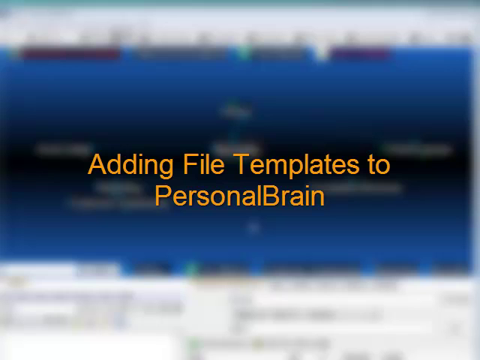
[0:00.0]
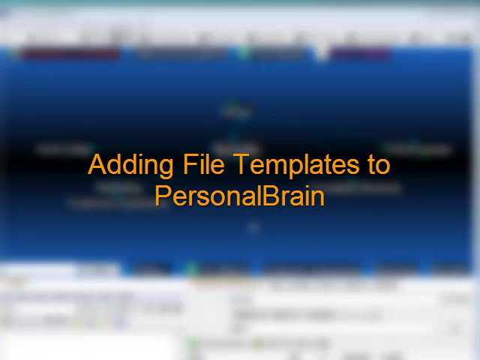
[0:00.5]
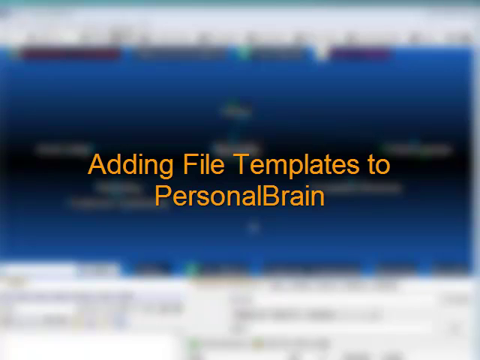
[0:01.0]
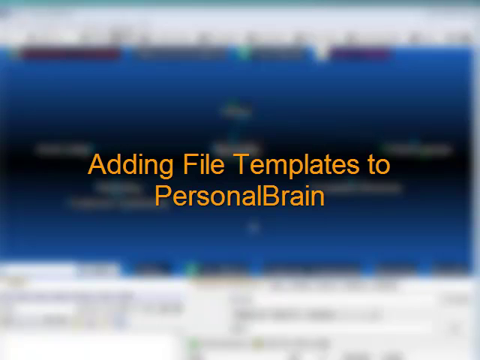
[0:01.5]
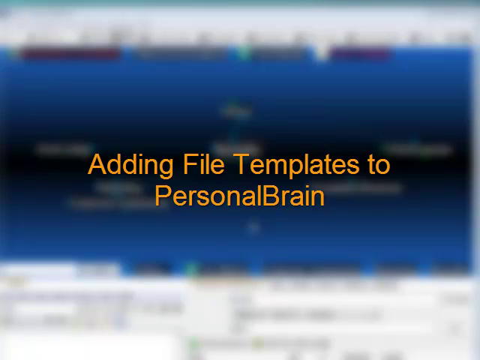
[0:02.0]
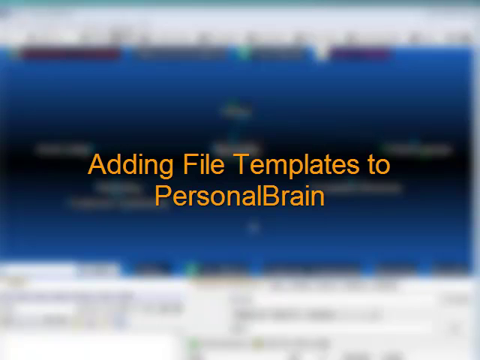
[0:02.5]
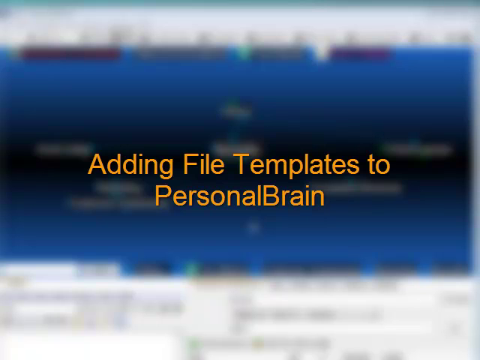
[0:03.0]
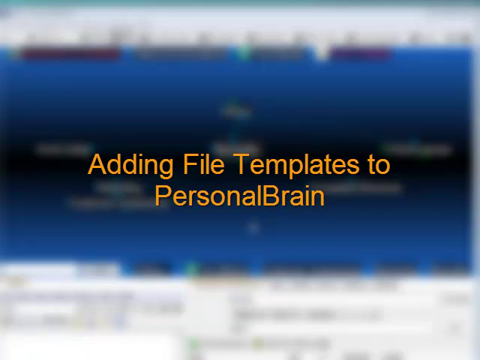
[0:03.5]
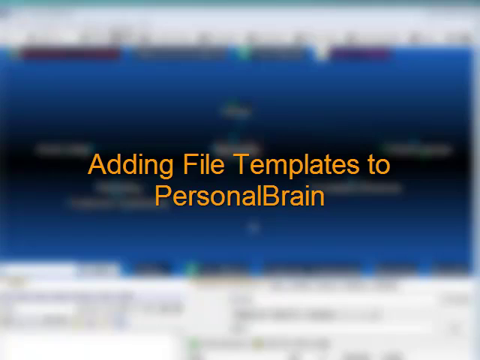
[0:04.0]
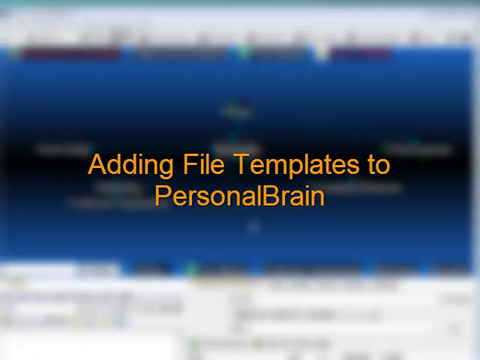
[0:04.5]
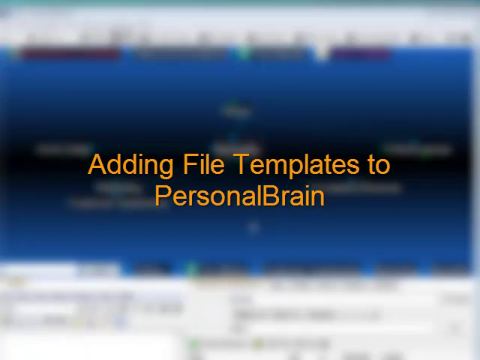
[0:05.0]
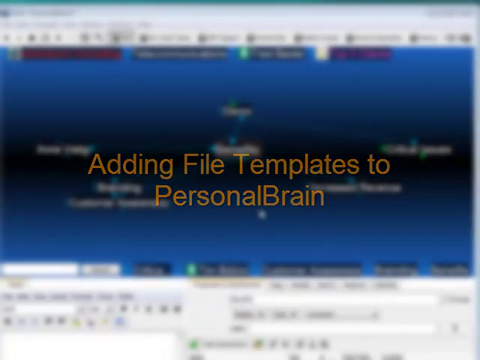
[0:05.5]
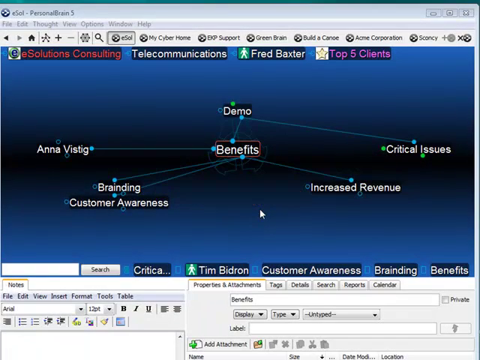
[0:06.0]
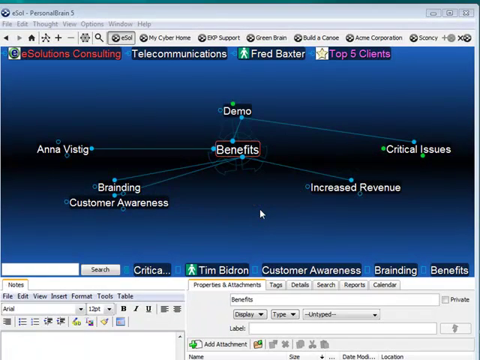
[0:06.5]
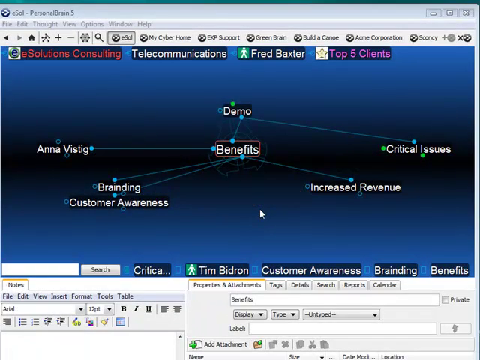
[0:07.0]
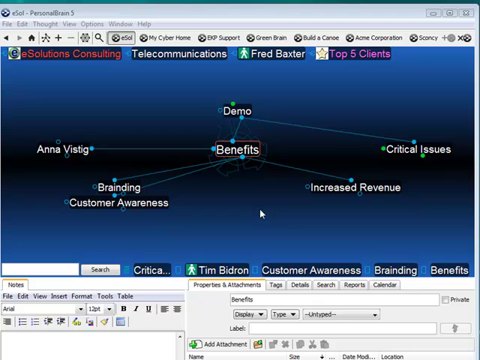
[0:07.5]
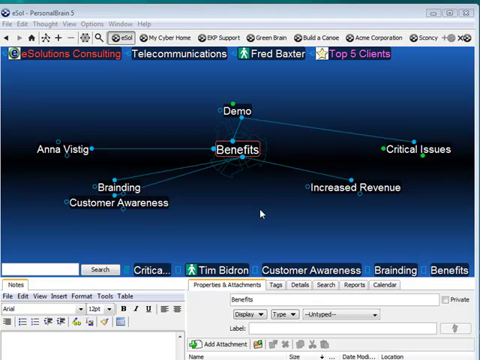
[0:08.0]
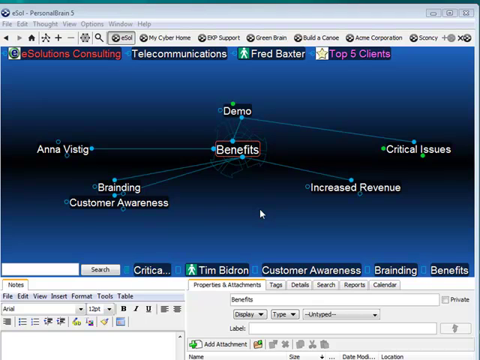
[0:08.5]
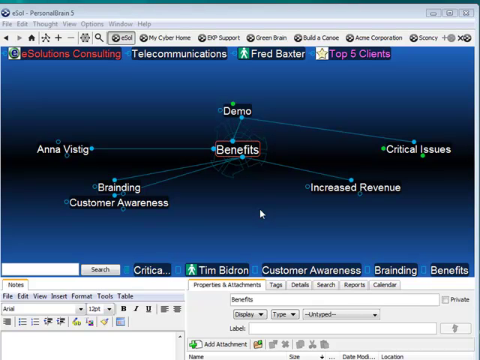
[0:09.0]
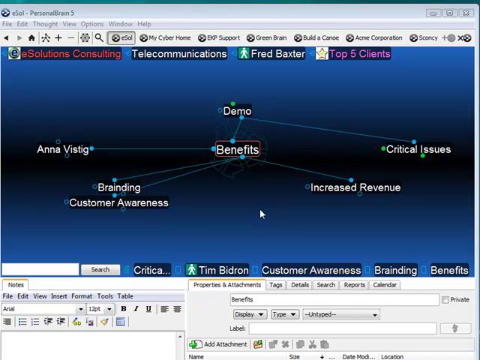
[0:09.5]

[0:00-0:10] Orange text reads "adding file templates to personal brain," with what seems to be faded-out text in the background. The video then shows some sort of web design that appears to be a demo map, with "demo," "benefits," "analytics," "branding," "customer awareness," "increased revenue" and "critical issues" shown as its stats. "Solutions," "consulting," "telecommunications," "Fred Baxter" and "top five clients" appear as headings. It seems to be in a software called Personal Brain 5, apparently mind map software.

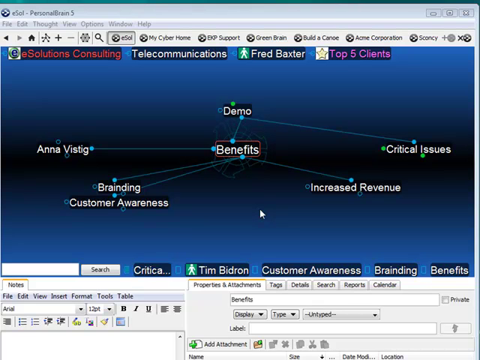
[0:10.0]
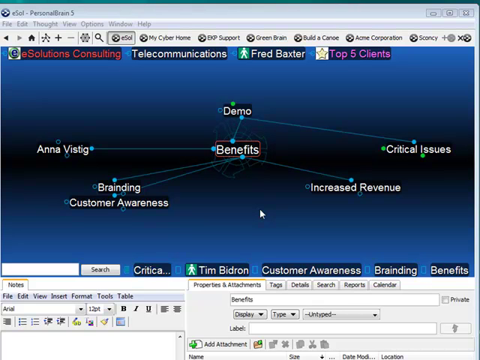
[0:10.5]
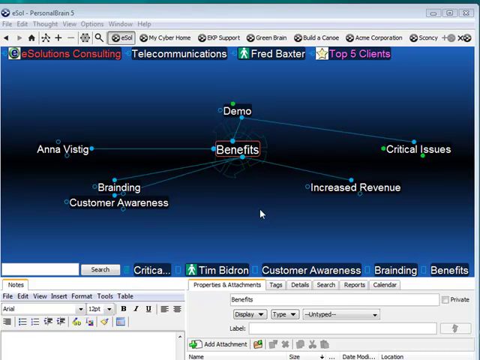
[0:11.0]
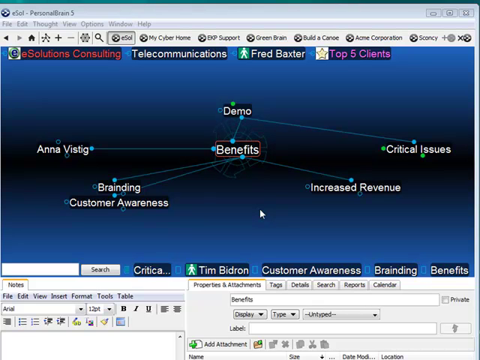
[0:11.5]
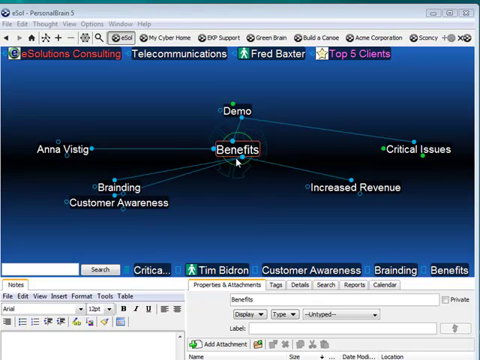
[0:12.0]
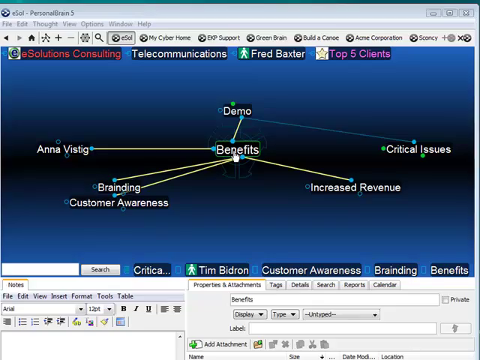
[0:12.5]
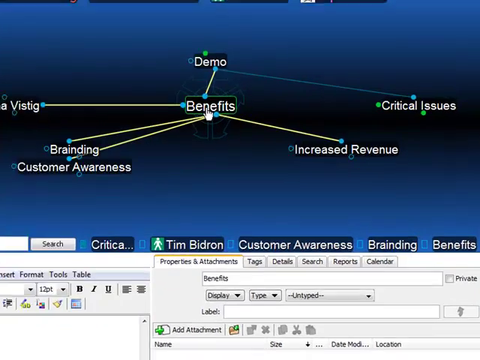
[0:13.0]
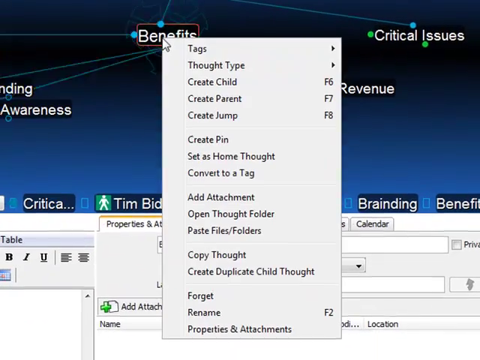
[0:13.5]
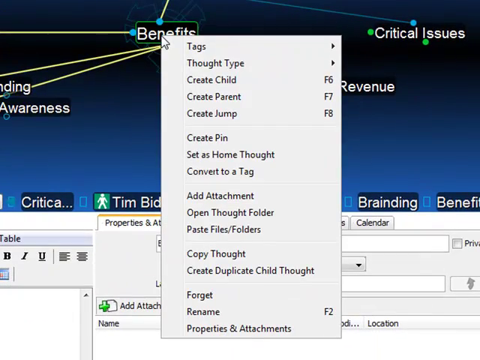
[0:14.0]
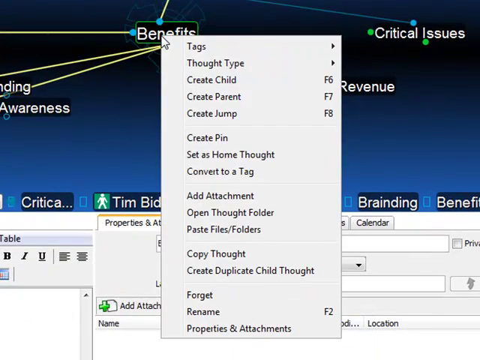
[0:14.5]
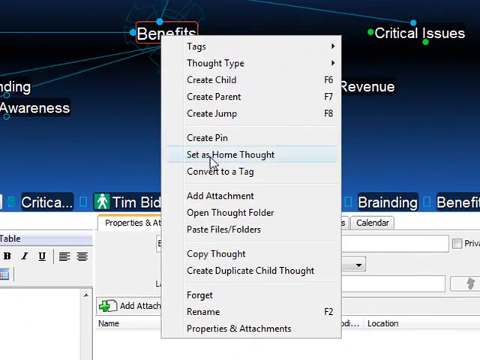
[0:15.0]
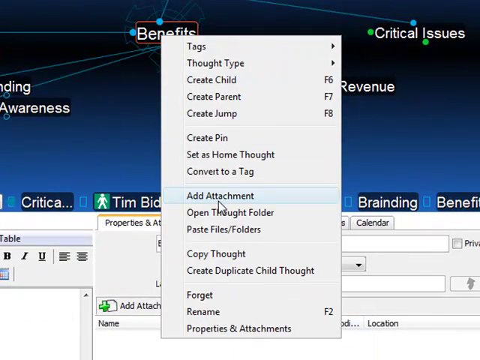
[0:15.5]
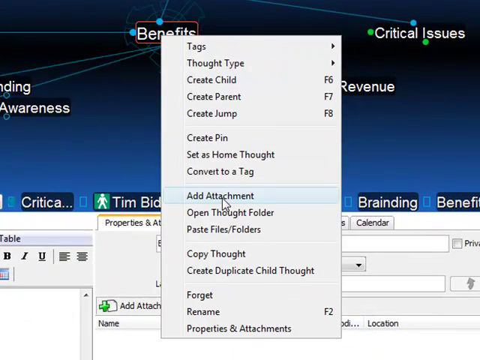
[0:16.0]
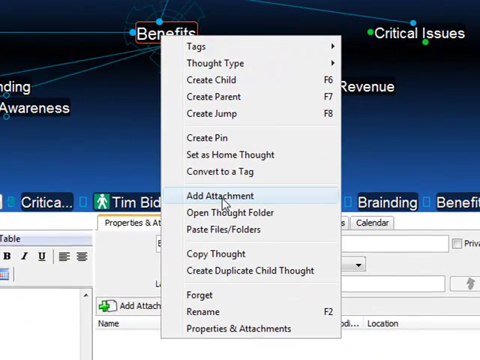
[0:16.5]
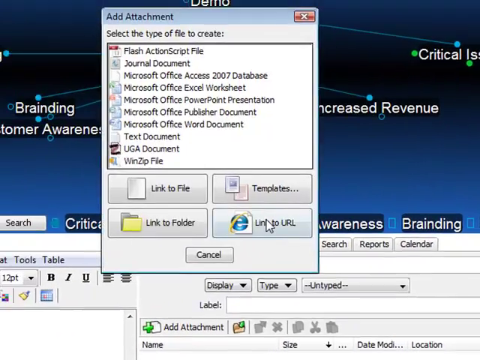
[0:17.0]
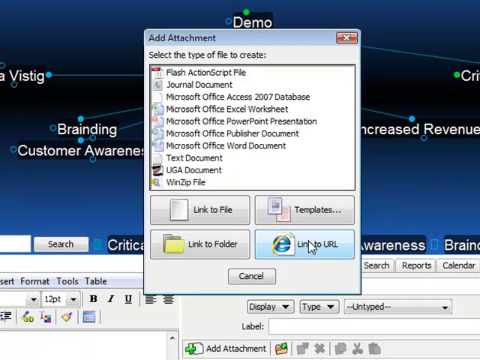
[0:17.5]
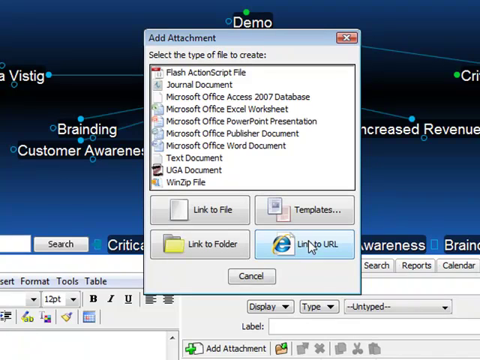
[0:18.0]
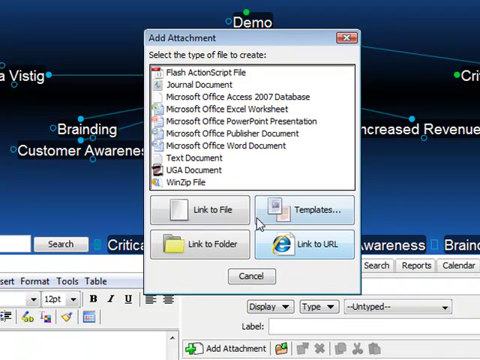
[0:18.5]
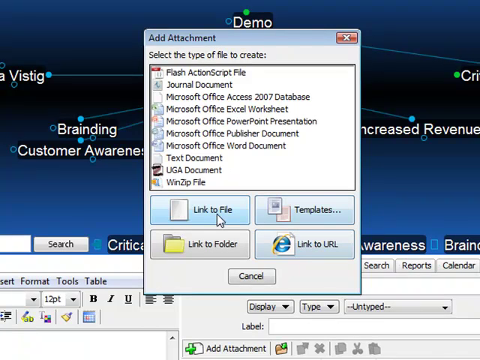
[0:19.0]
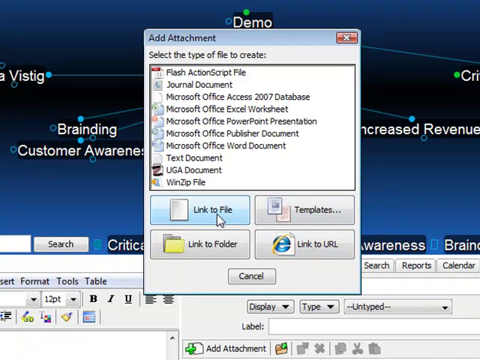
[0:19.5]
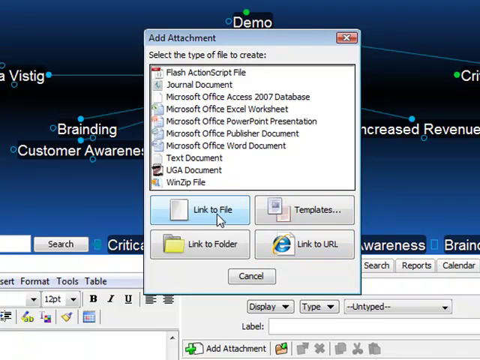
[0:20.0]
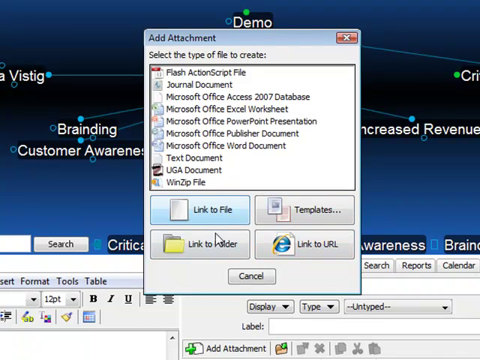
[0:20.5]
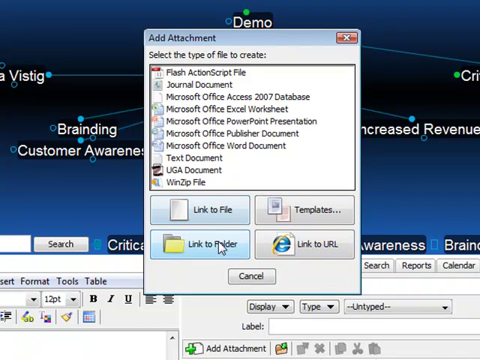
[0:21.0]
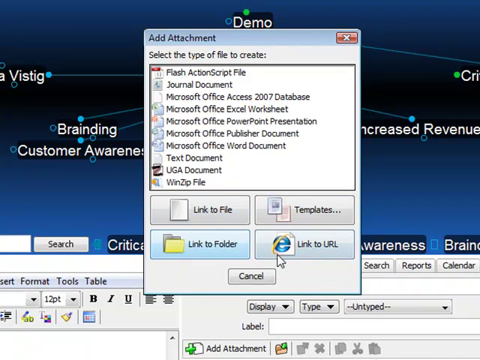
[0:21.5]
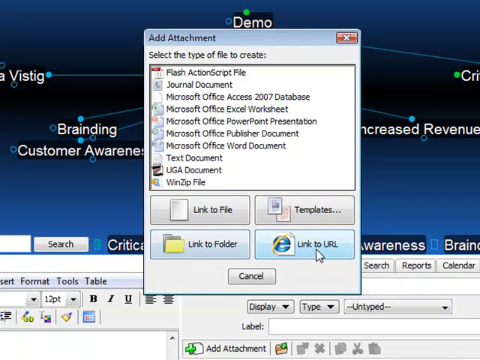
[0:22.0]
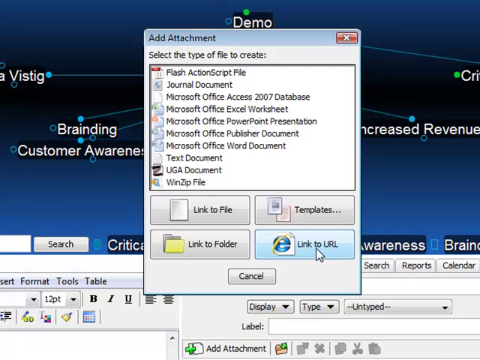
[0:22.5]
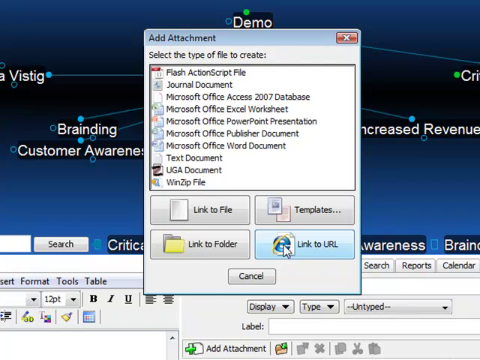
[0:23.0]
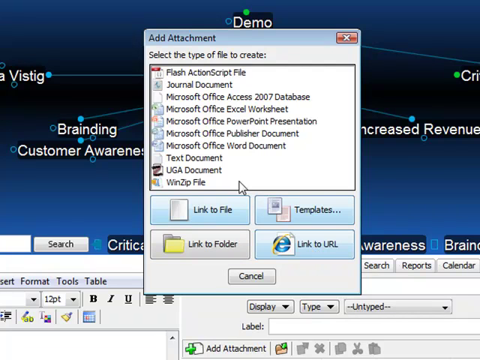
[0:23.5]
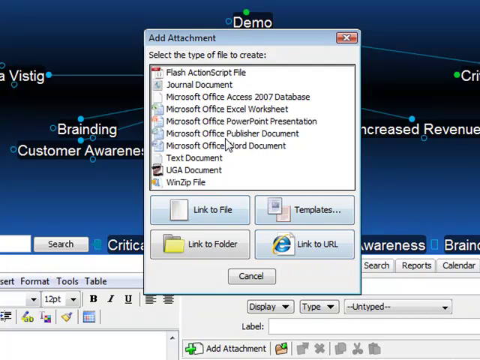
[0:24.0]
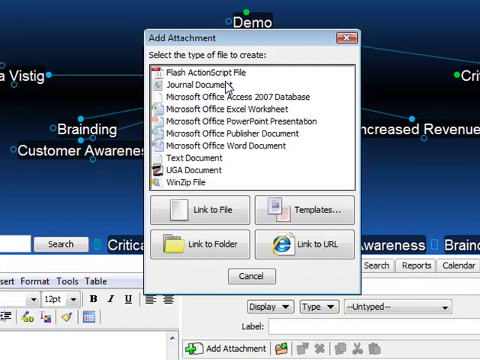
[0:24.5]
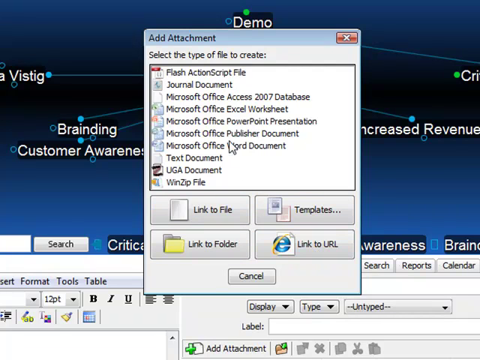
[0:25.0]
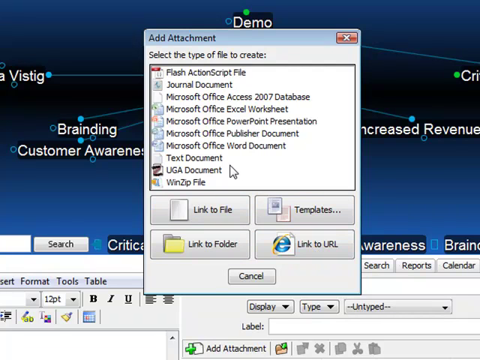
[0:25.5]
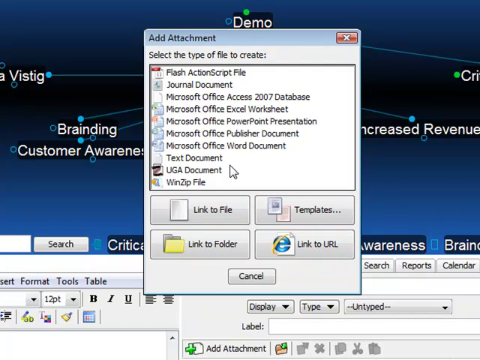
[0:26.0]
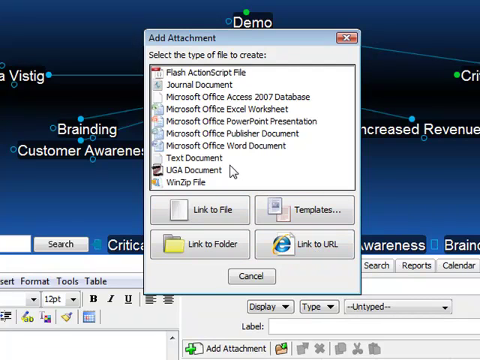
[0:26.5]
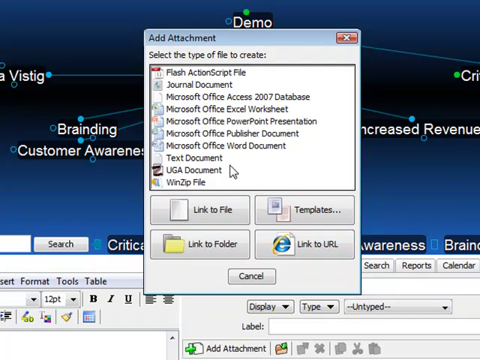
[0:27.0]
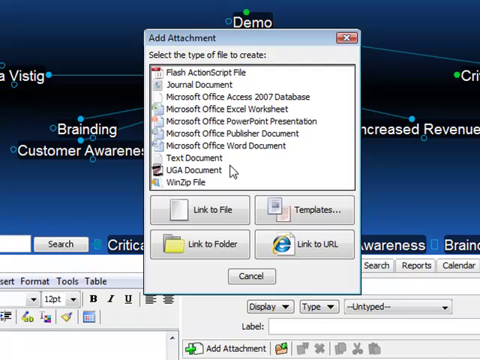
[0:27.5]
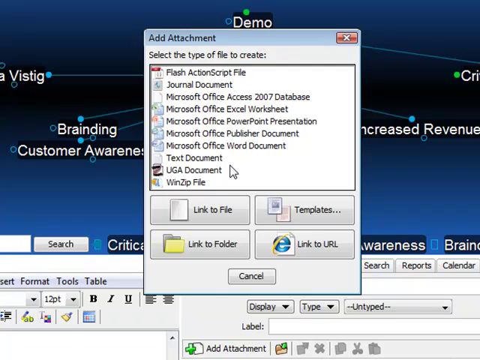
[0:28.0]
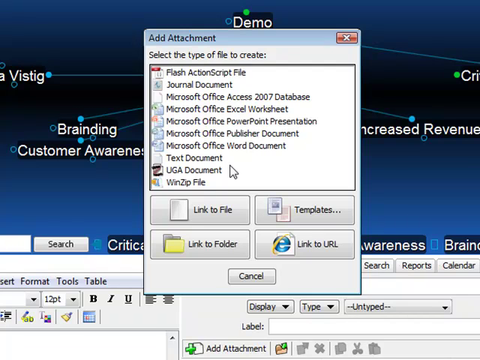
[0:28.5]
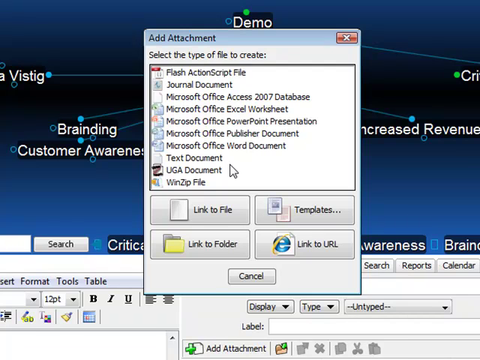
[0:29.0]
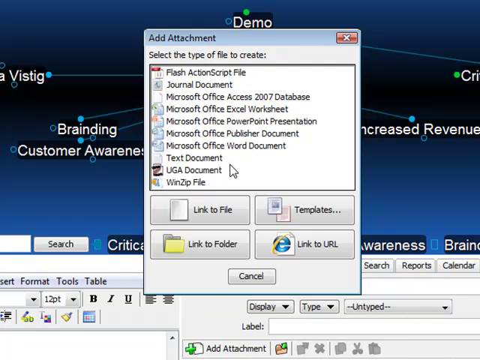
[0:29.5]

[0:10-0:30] More of the same map is shown. After a right-click, the view zooms in to "benefits," and a menu shows the options "tags," "thought type," "create child F6," "create parent F7," "create jump F8," "create pin," "set as home thought," "convert to a tag," "add attachment," "open thought folder," "paste file/folders," "copy thought," "create duplicate child thought," "forget," "rename," "properties" and "attachments." The user clicks "add attachment," and a prompt reads "select the type of file to create," listing flash, ActionScript file, general document, Microsoft Office Access 2007 database, Microsoft Office Excel worksheet, Microsoft Office PowerPoint presentation, Microsoft Office Publisher document, Microsoft Office Word document, text document, UGA document and WinZip file, followed by "link to file," "templates," "link to folder," "link to URL" and "cancel." The user does not click anything and exits out.